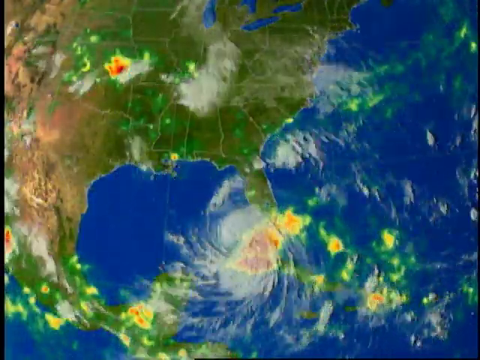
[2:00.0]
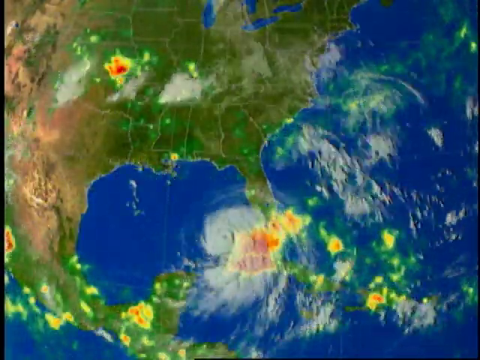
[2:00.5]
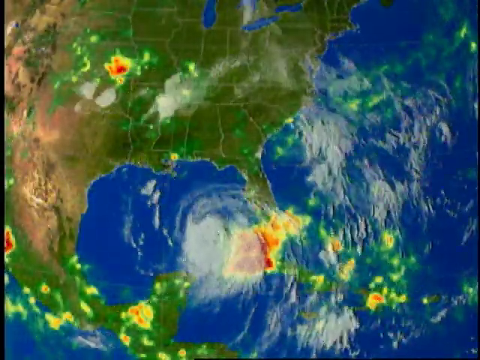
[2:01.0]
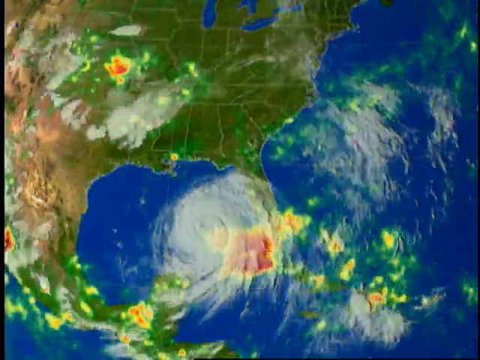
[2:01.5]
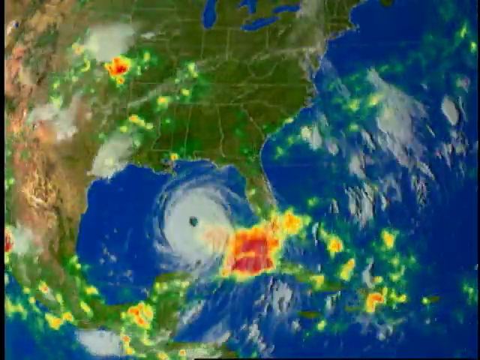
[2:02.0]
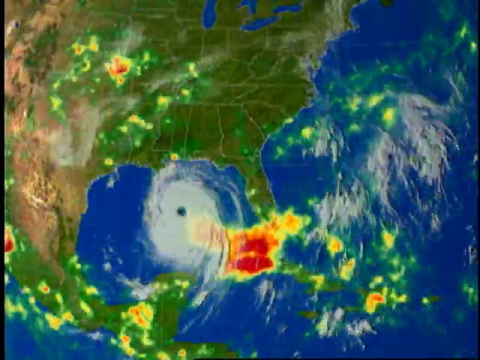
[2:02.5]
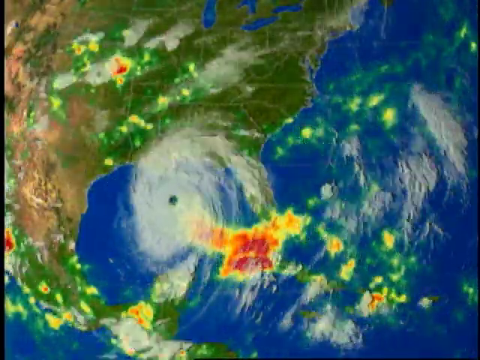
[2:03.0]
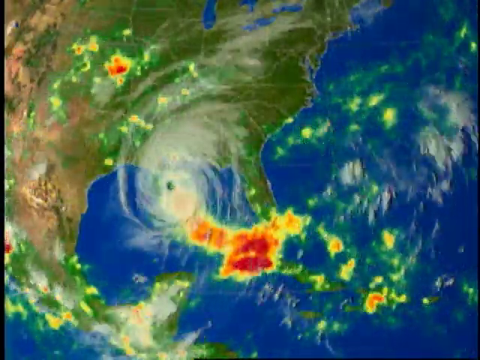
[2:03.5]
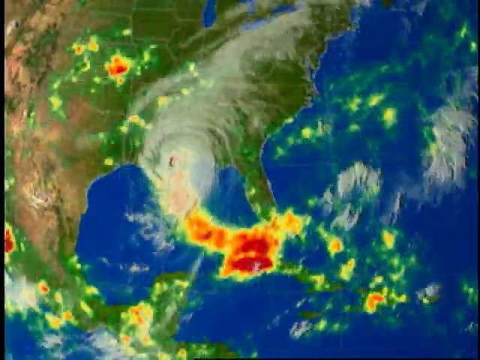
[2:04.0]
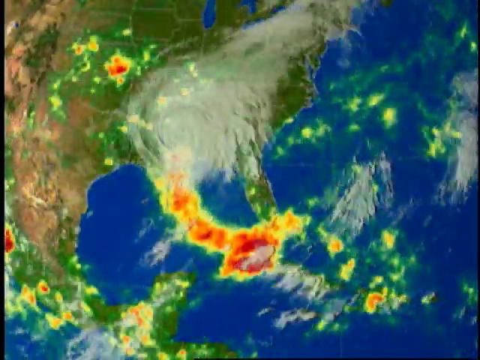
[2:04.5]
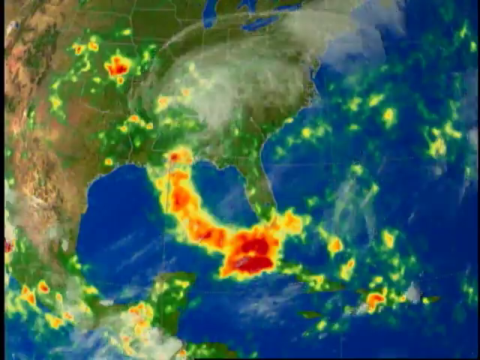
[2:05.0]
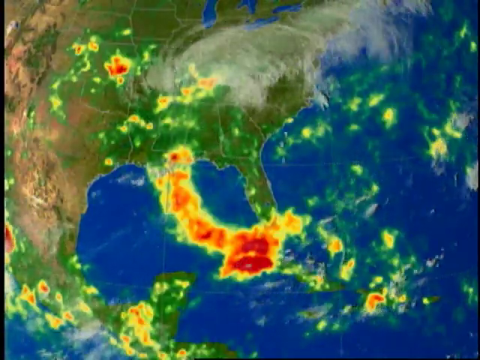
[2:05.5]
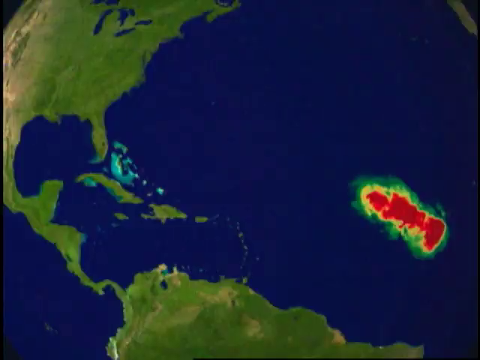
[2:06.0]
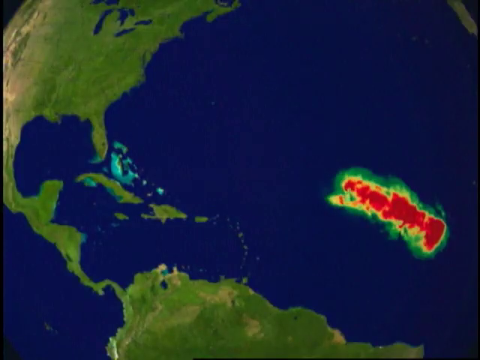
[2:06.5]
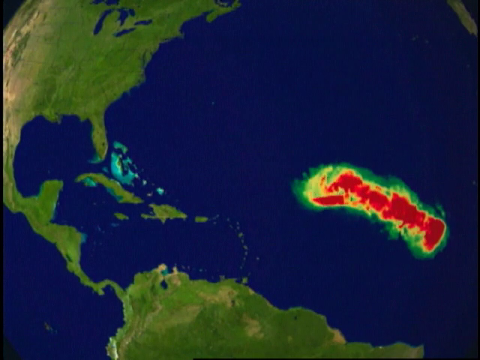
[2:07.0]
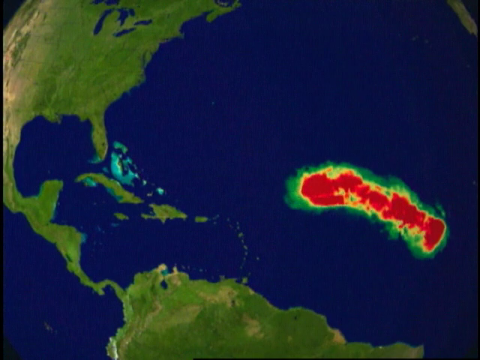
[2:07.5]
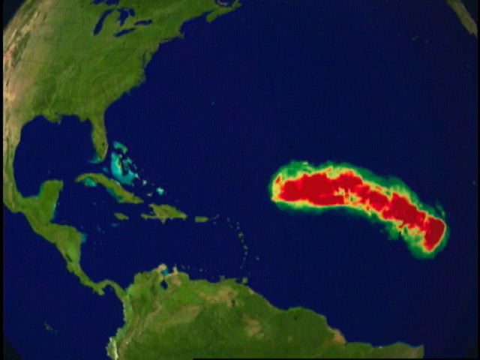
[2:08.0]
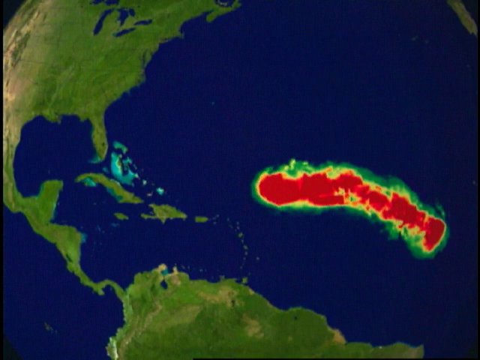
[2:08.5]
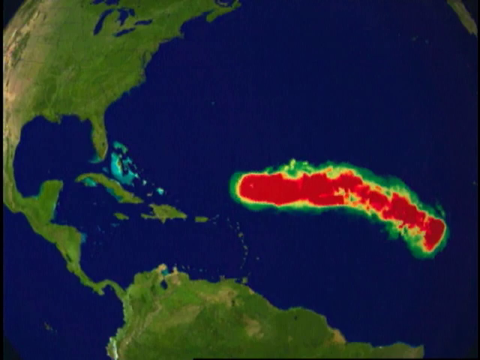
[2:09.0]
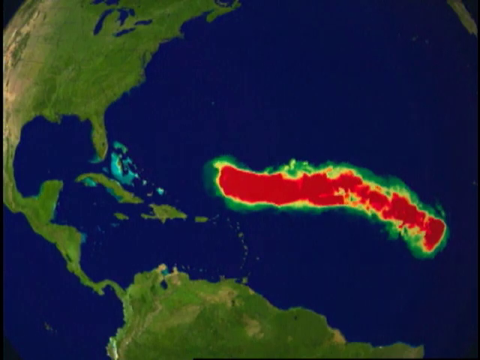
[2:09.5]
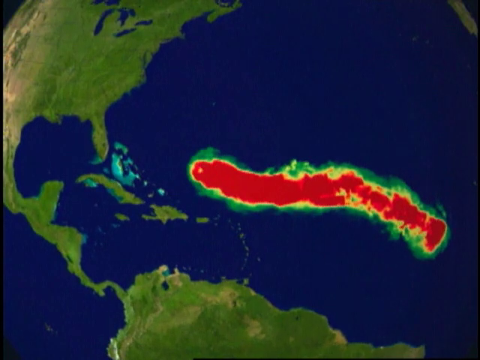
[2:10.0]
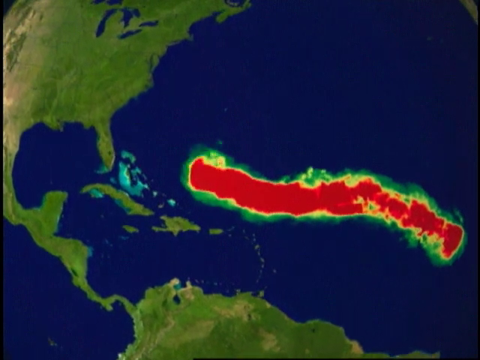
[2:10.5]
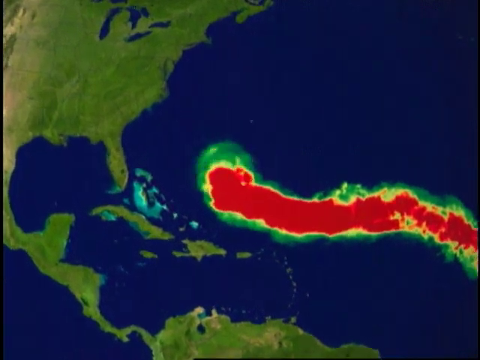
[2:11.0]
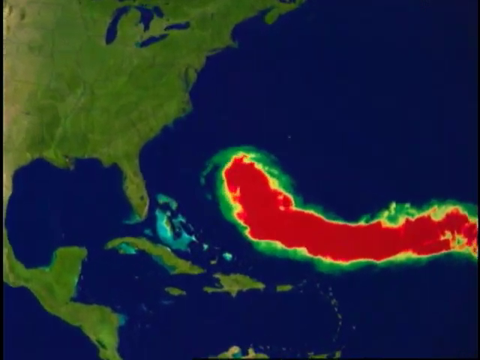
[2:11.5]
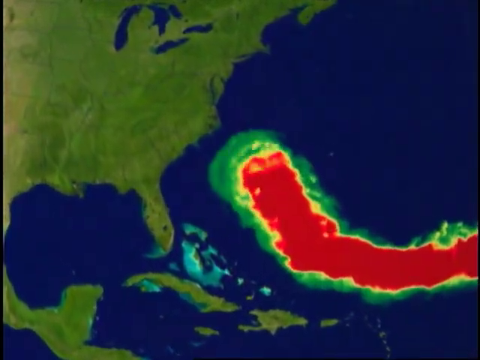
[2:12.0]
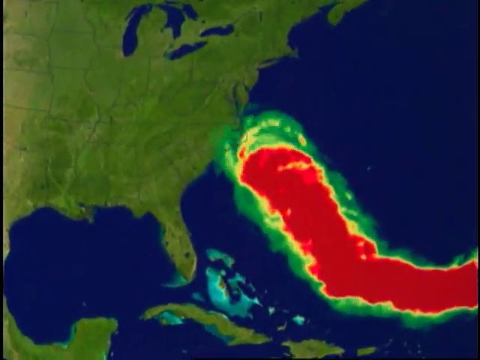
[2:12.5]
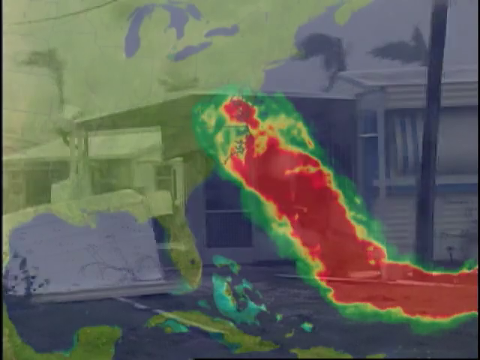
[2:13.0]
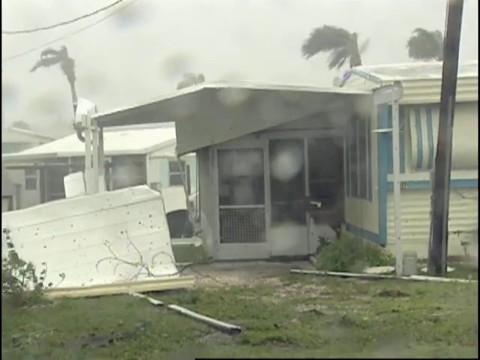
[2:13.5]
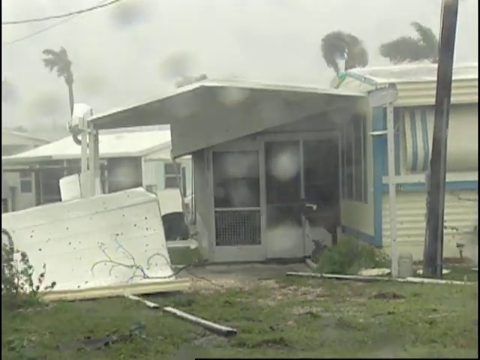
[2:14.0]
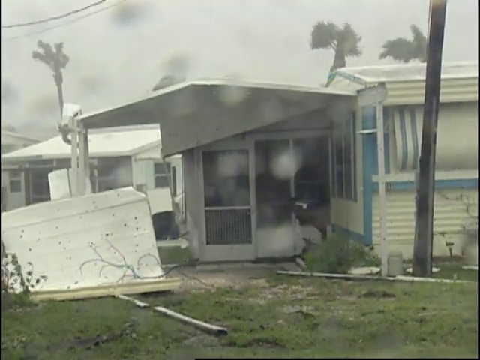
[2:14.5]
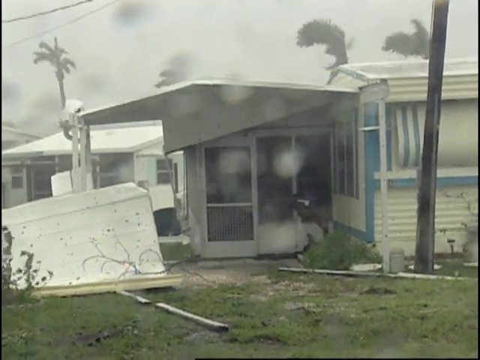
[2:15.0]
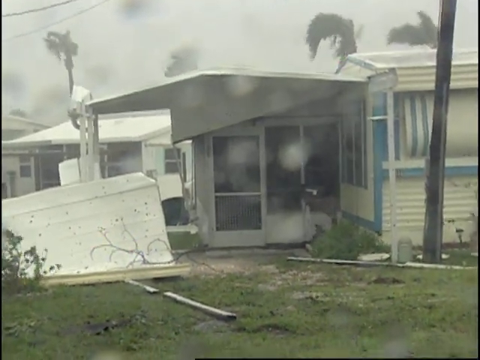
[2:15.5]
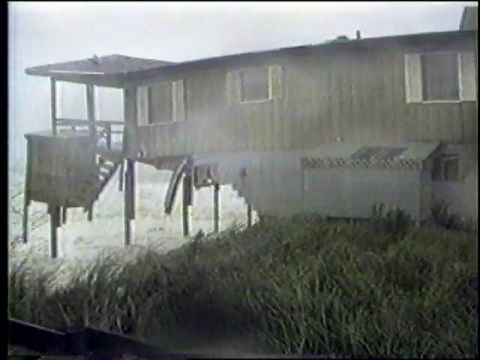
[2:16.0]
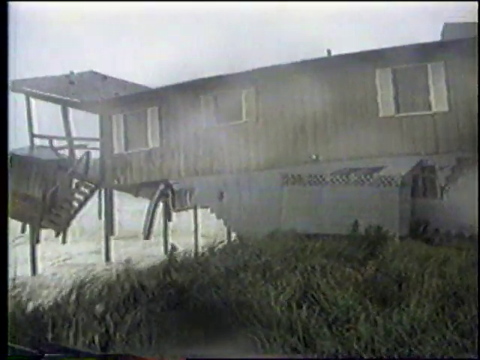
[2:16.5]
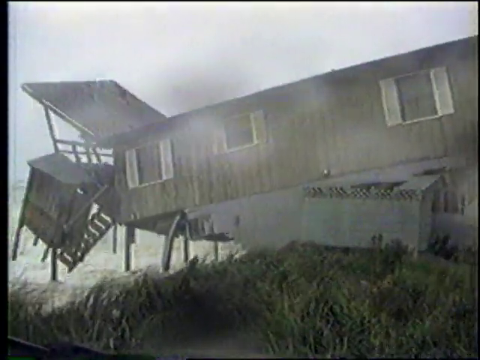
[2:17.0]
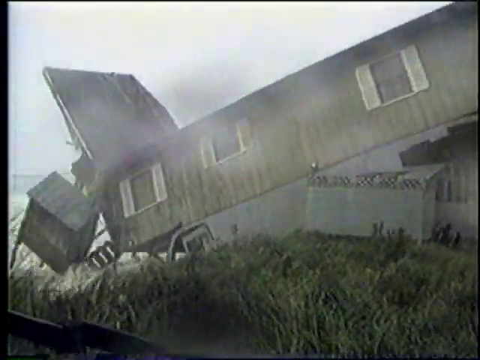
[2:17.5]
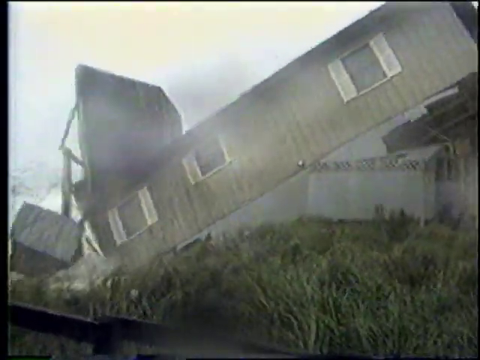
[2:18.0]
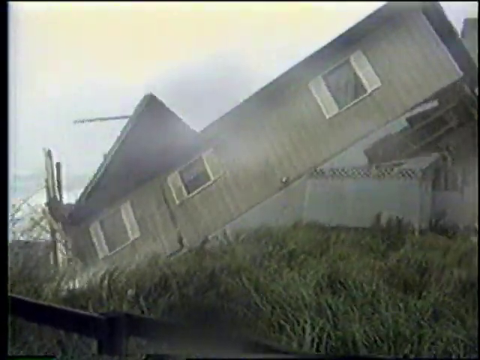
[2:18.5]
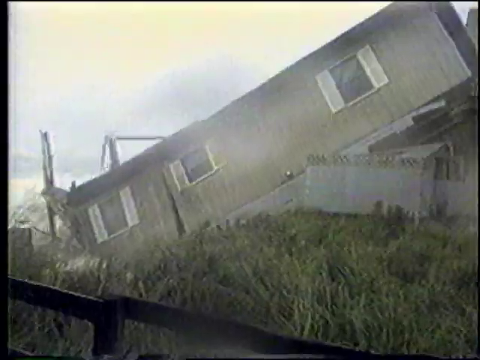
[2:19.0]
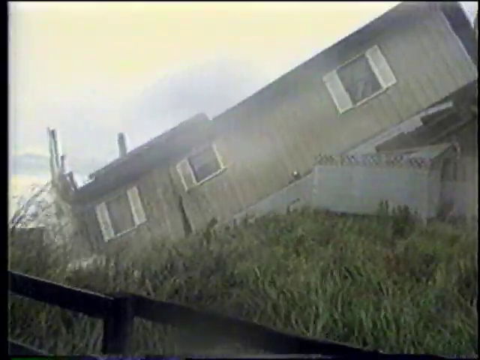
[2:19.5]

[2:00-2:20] A map shows the United States and Mexico, with the water of the Atlantic Ocean and the Gulf in blue and a bunch of white clouds on the screen; it looks like something from a meteorology newscast. Some of the clouds are yellow with red spots in the middle that indicate the intensity of the weather. White clouds swirling in the Gulf of America represent a hurricane, and its path is outlined in a globular red, orange and yellow shape. The hurricane moves up through the United States. The view switches to an image of the United States, Central America, the top of South America and the Atlantic Ocean, where the path of a hurricane is outlined in red, sort of globular like paint, with green around the red. It moves toward the United States and Florida, then curves up and hits the East Coast around New York. Next, a house with palm trees behind it is in a storm; the trees are blowing, there is a lot of debris on the ground, and it looks like part of the roof is off and lying on the left side of the screen. Then another house next to the ocean collapses into the ocean.